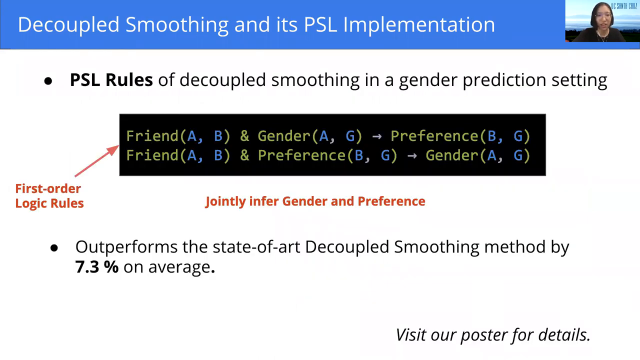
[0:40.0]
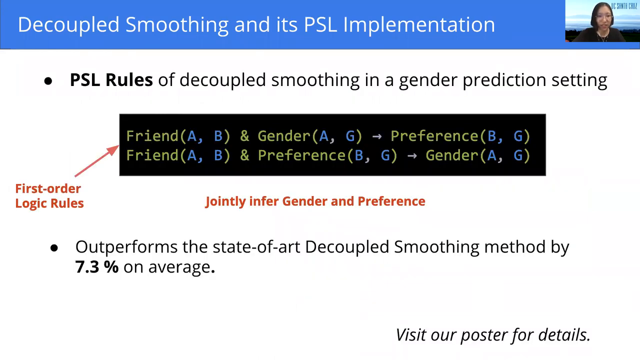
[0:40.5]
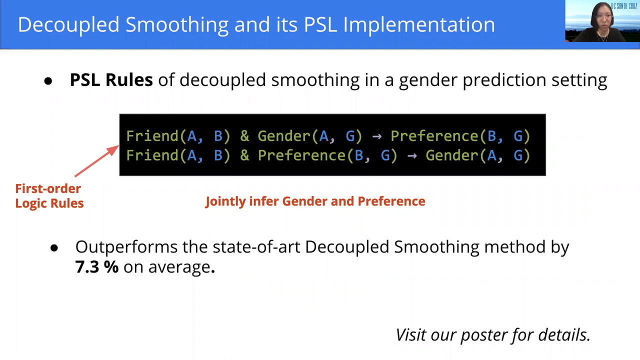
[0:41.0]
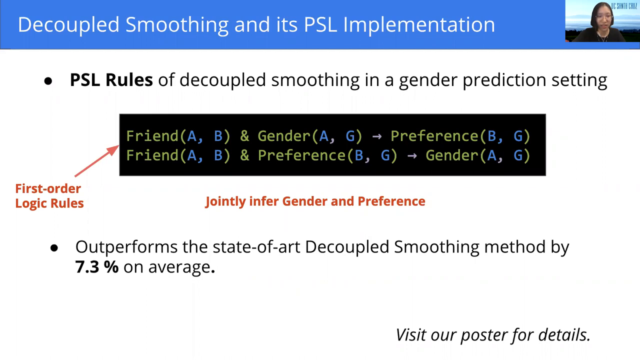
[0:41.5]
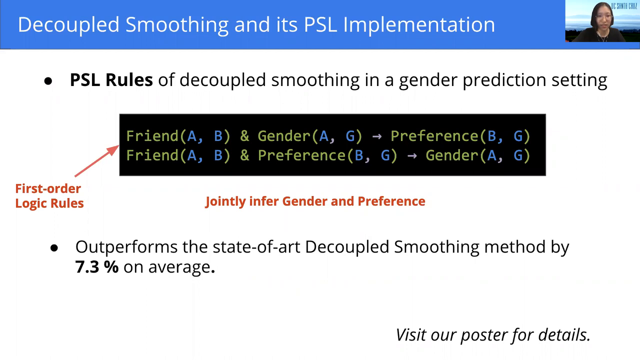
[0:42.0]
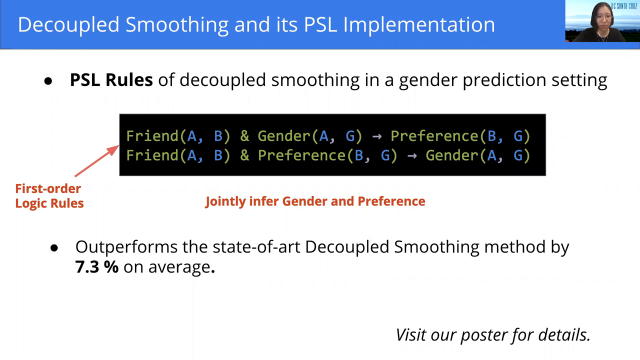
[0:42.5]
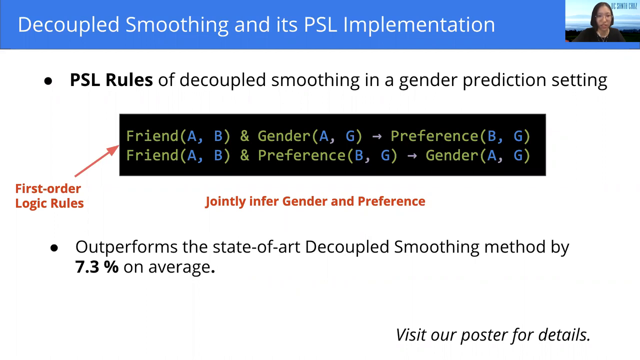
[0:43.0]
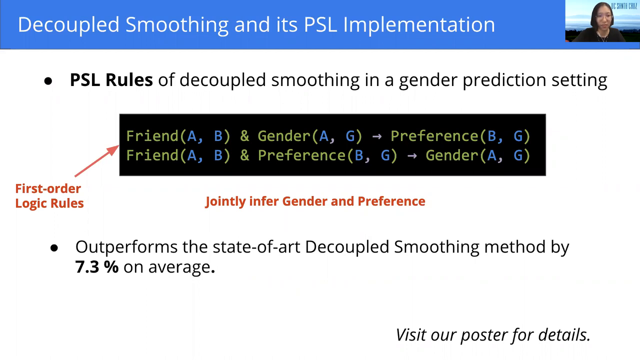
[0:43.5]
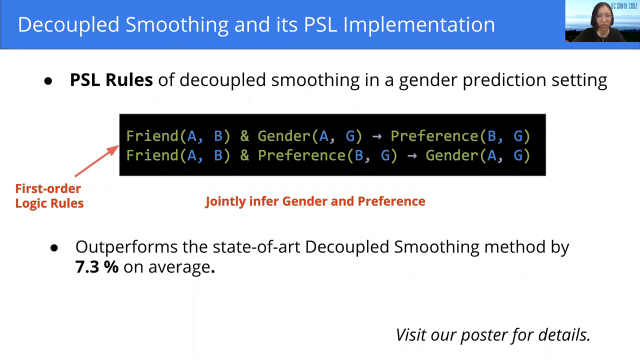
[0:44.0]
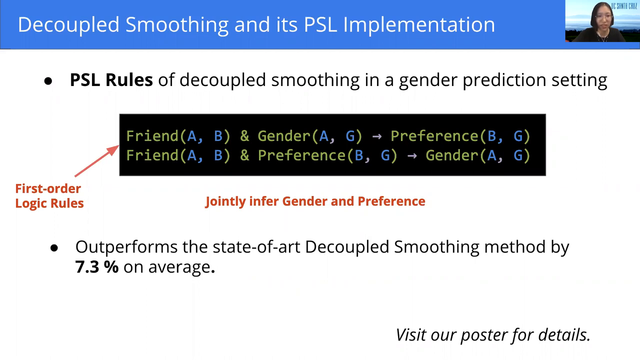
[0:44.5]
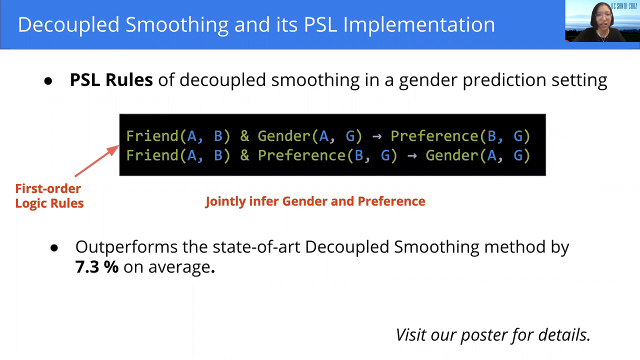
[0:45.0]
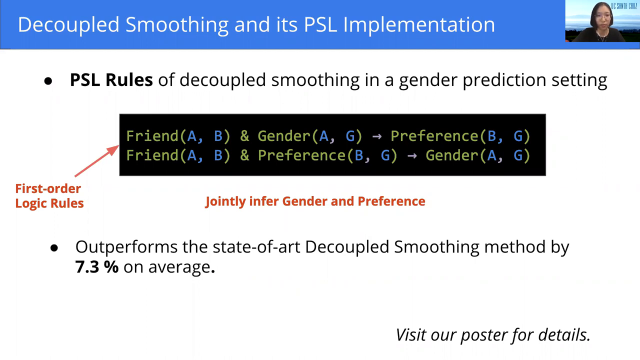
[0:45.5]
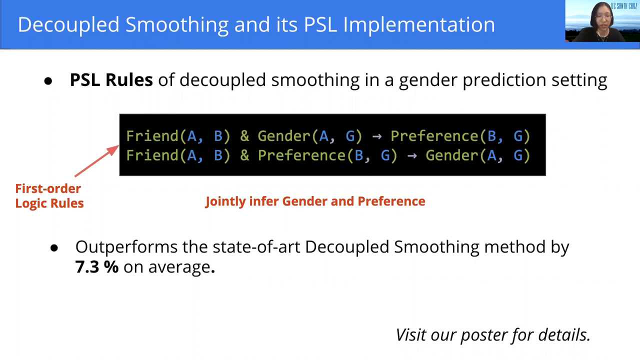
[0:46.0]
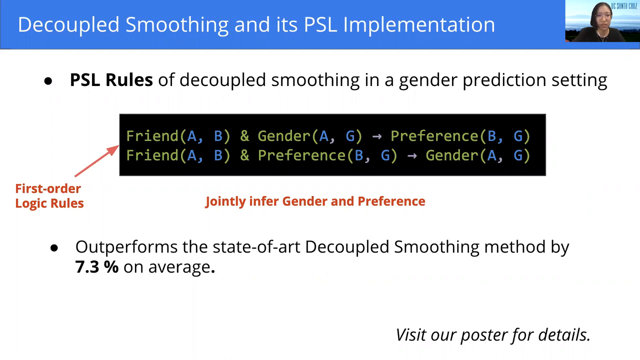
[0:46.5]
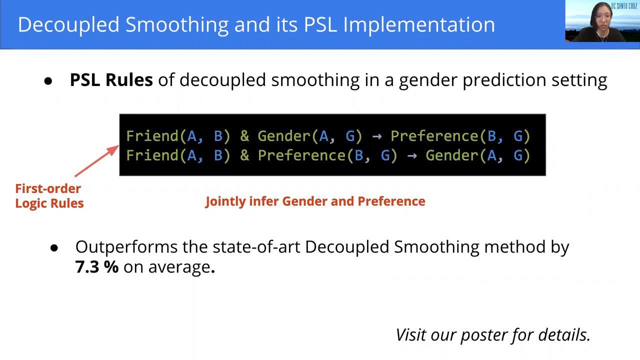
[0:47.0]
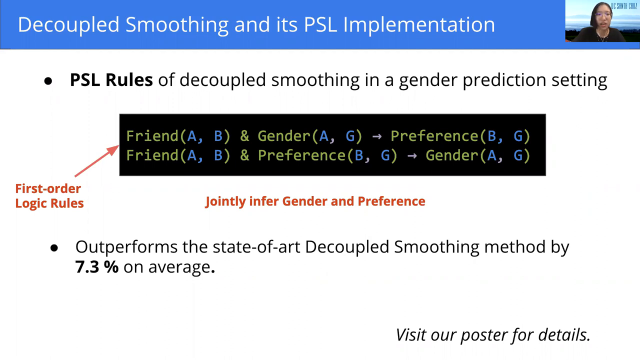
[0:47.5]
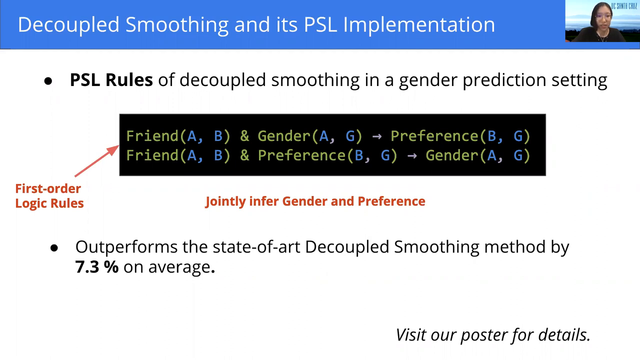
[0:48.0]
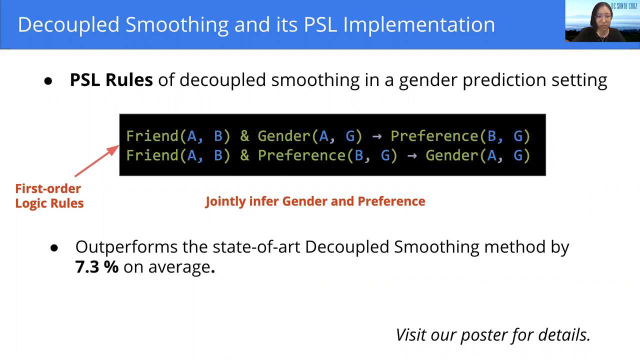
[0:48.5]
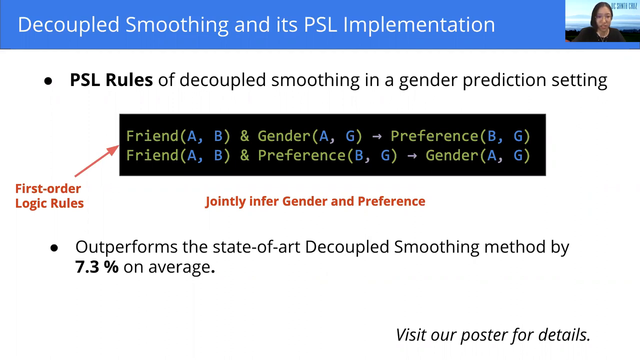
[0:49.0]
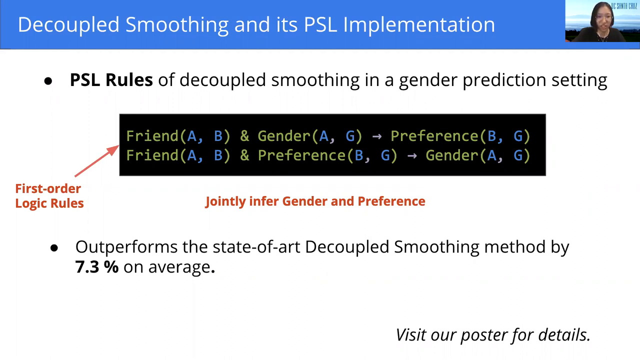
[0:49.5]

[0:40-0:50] The slide reads "Decoupled smoothing and its PSL implementation," "PSL rules of decoupled smoothing in a gender prediction setting," "friend and gender preference," "friend and preference gender," "first order logic rules jointly inferred gender and preference," and "the state of art decoupled smoothing method by 7.3% on average." The background is white. A woman is talking in the top right corner of the screen, hard to see, apparently going over the slides. The video stays on this slide the whole time.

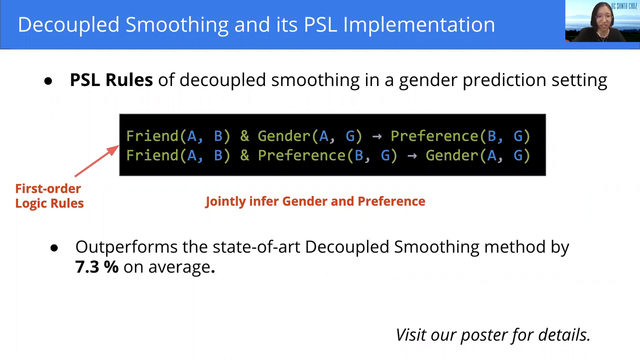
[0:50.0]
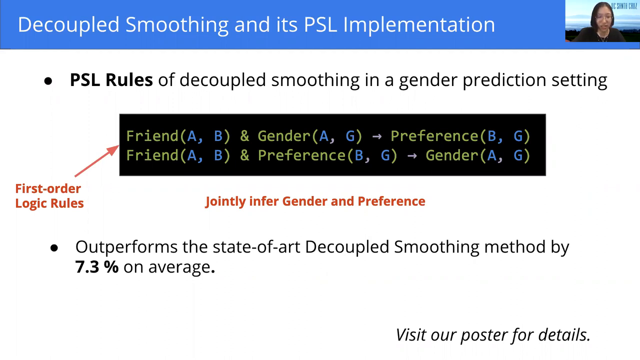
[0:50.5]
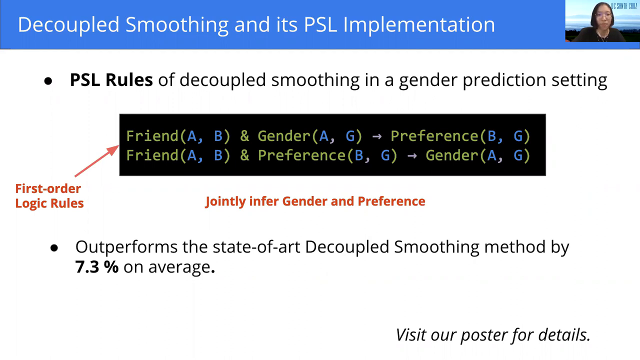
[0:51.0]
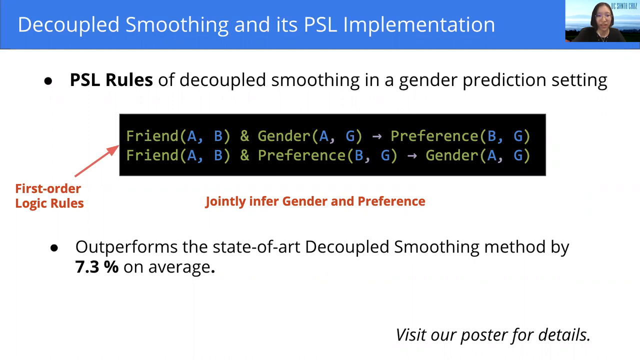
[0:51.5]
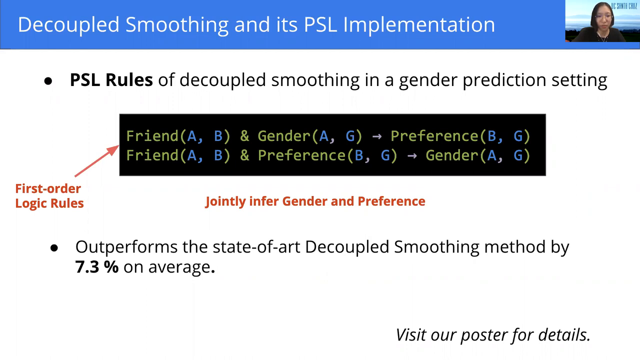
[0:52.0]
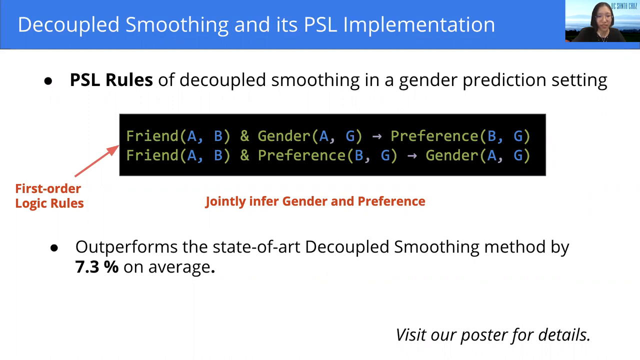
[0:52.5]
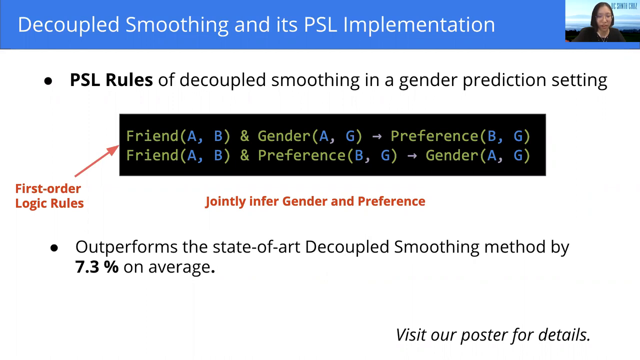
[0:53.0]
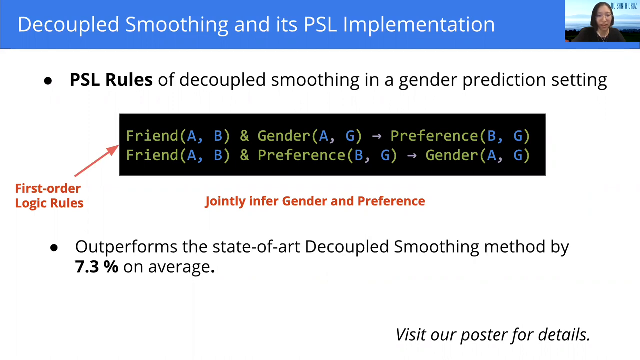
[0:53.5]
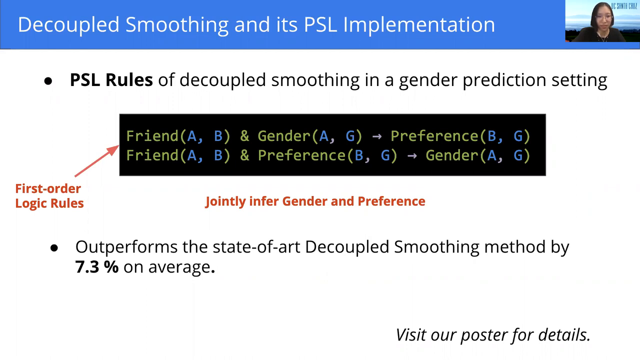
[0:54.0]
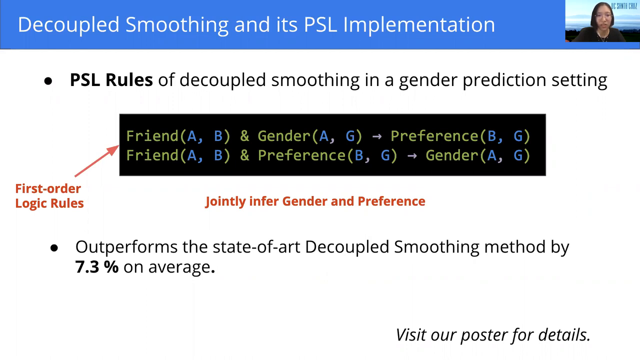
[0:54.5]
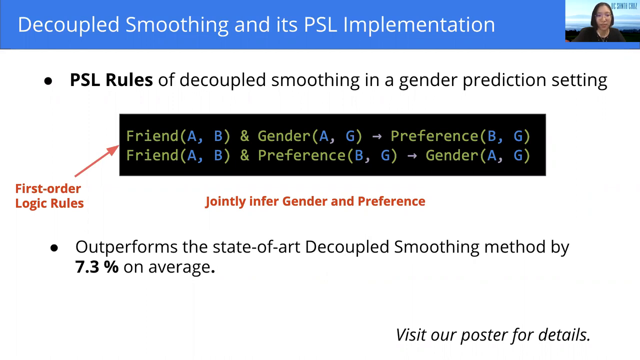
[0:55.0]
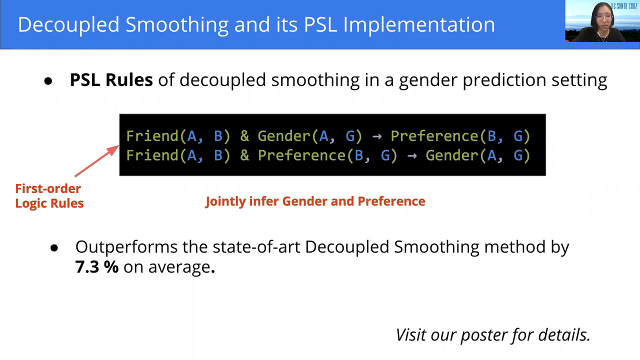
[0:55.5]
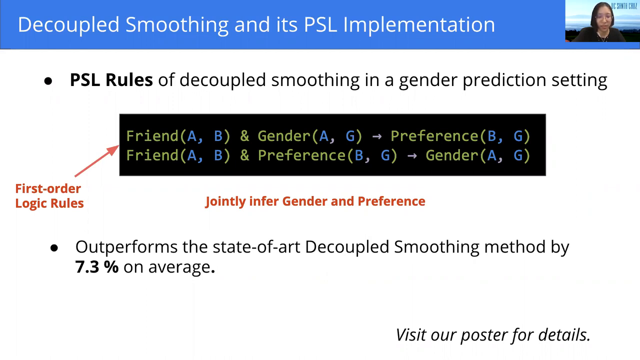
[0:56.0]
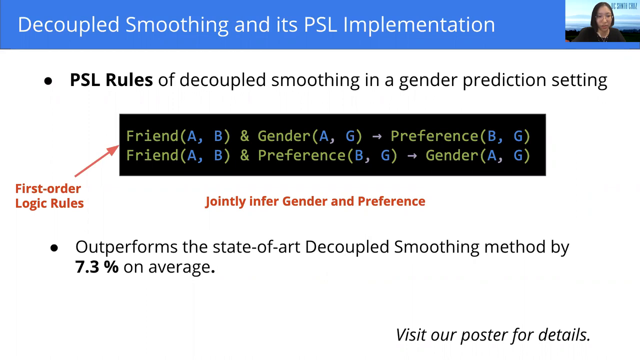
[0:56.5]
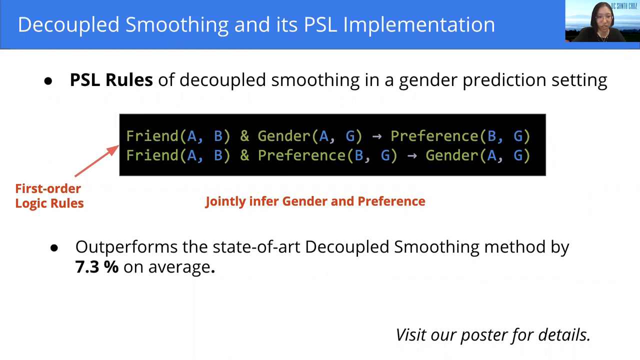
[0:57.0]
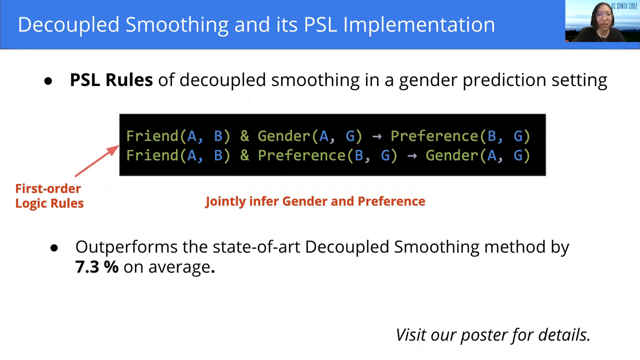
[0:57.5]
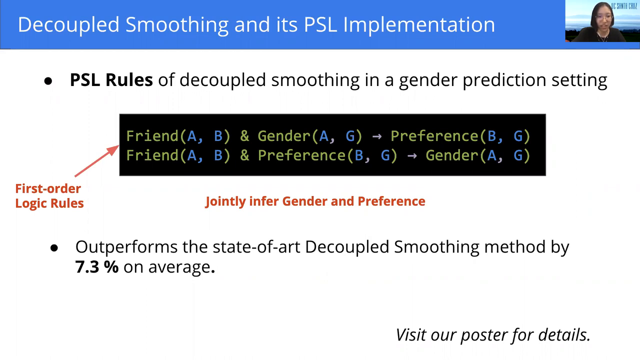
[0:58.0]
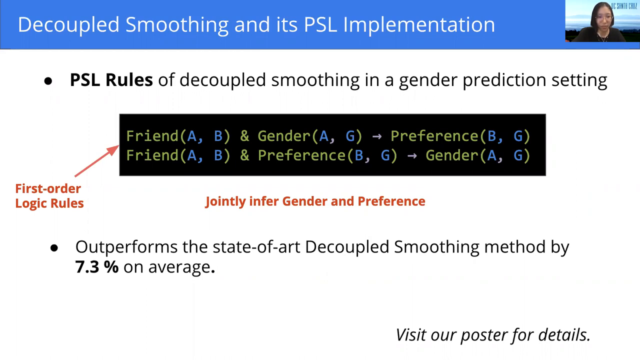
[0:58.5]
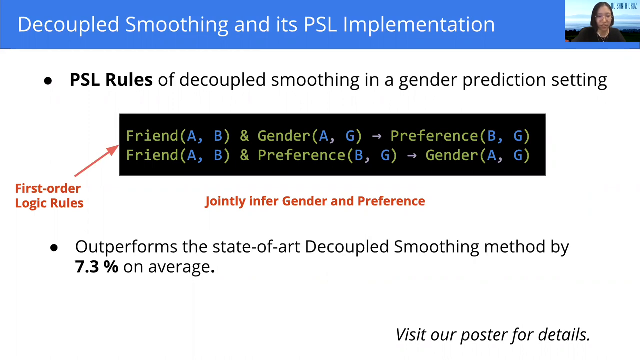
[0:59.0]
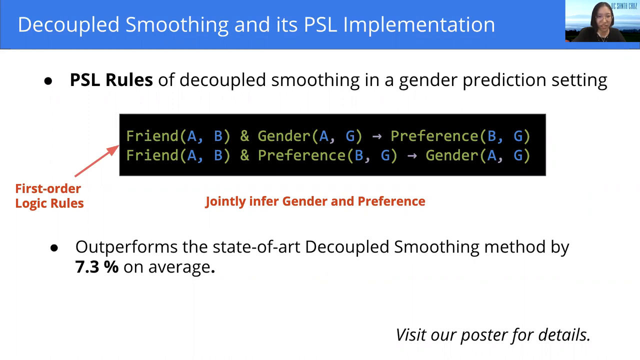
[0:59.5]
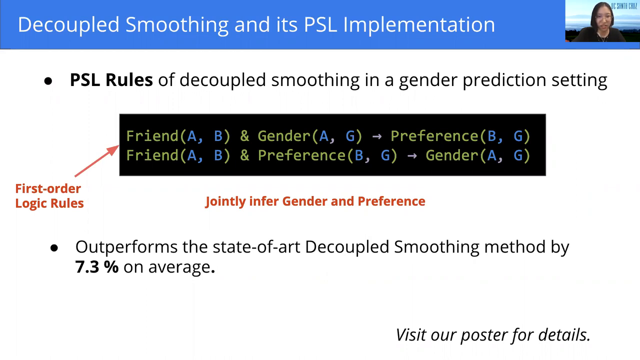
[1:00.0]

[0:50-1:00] The slide reads "Decoupled smoothing and its PSL implementation," "PSL rules of decoupled smoothing in a gender prediction setting," "Friend AB and gender AG, preference PG," "Friend AB and preference PG and gender AG," "first order logic rules only infer gender and preference," and "Outperforms the state-of-the-art decoupled smoothing method by 7.3% on average." A woman is talking at the top of the screen; she looks like she is maybe African American, but she is hard to see because her box is so small. The video stays on this slide the whole time.